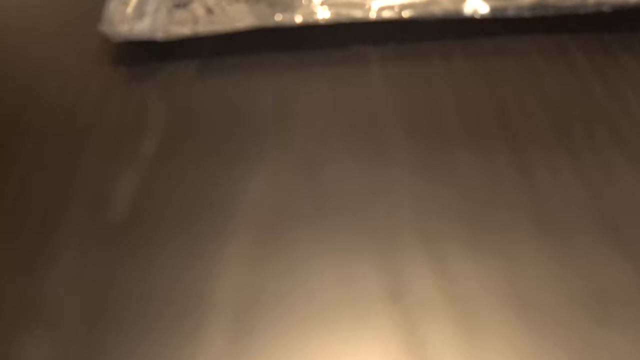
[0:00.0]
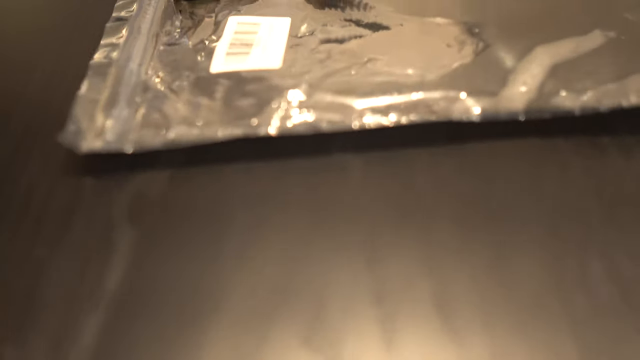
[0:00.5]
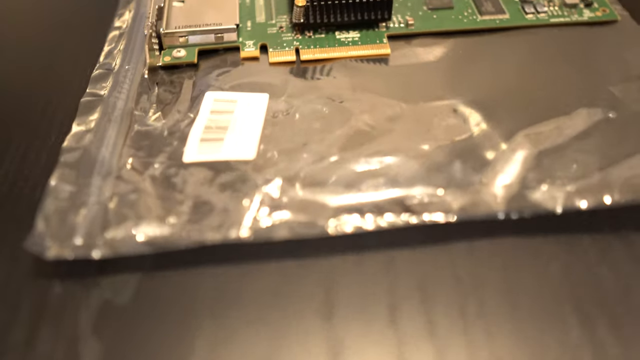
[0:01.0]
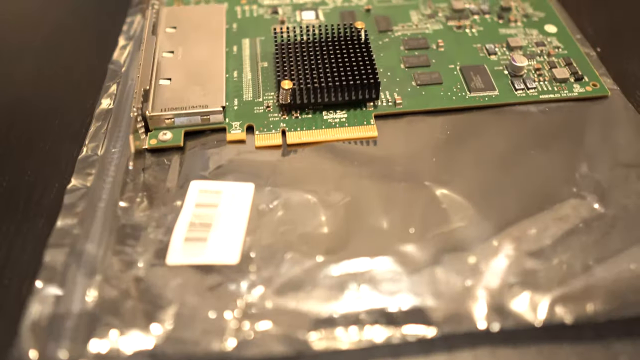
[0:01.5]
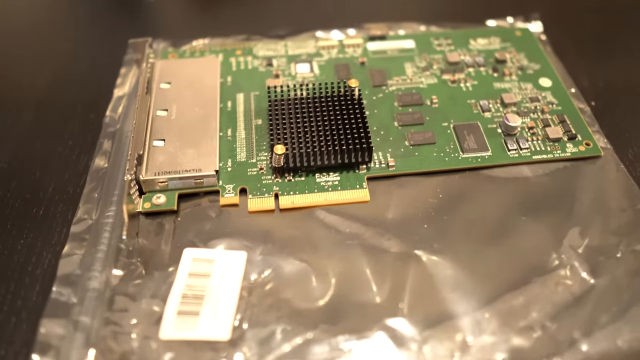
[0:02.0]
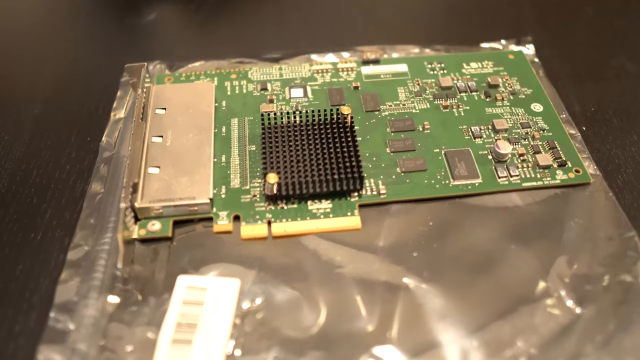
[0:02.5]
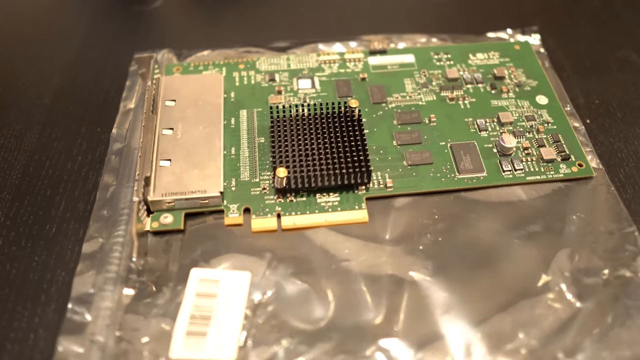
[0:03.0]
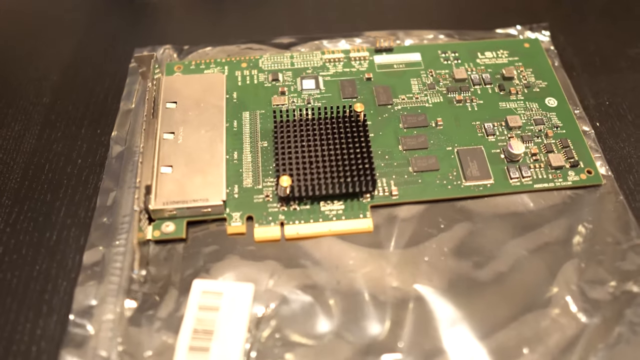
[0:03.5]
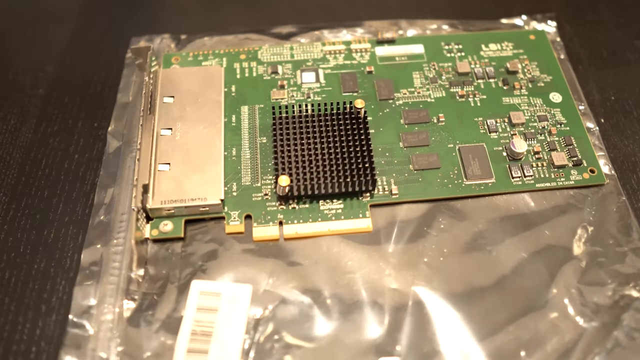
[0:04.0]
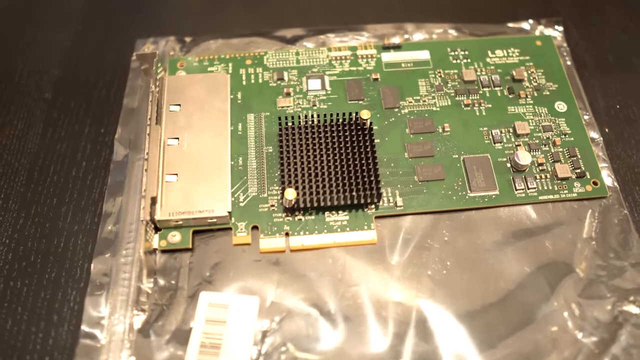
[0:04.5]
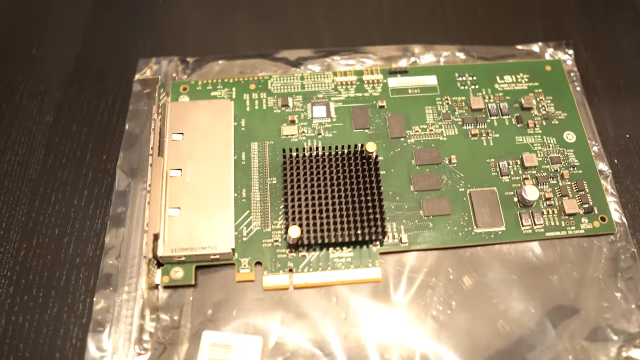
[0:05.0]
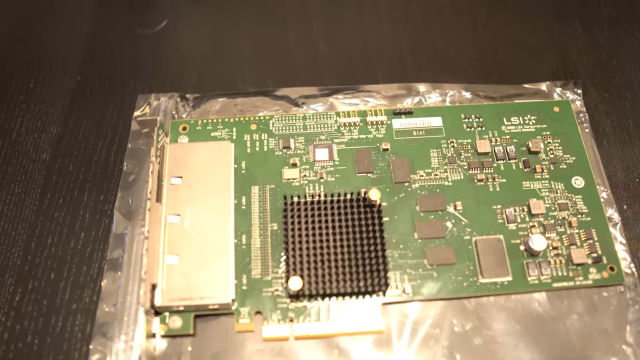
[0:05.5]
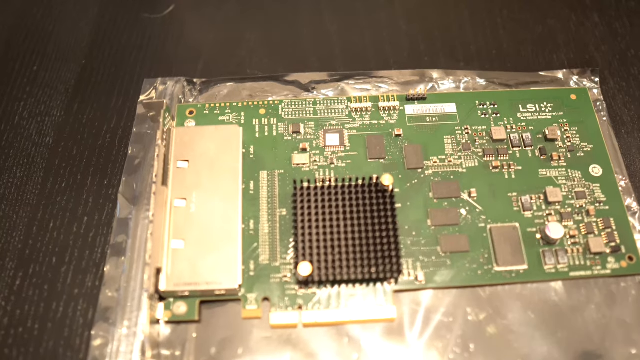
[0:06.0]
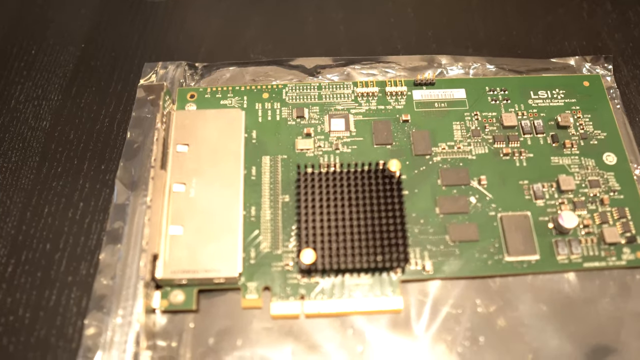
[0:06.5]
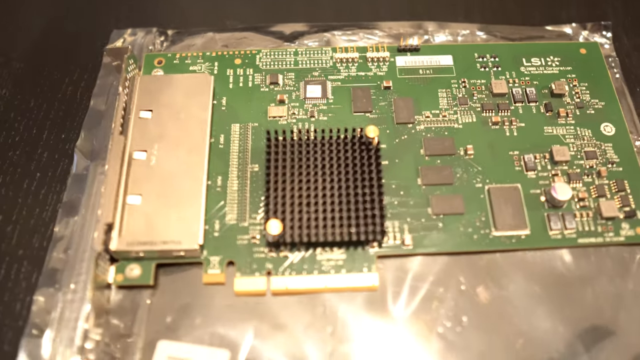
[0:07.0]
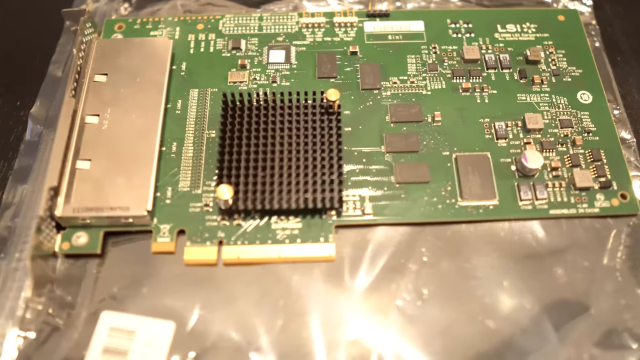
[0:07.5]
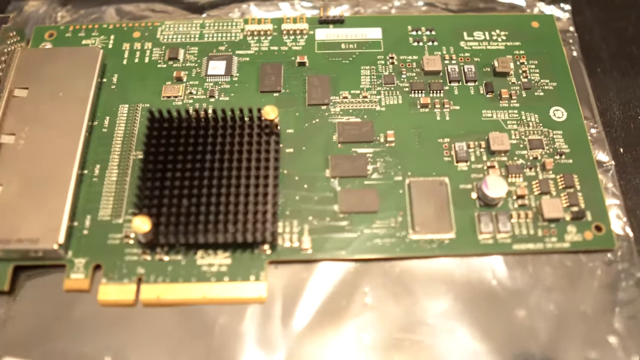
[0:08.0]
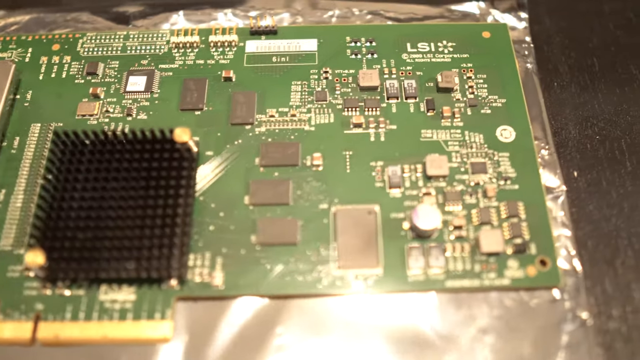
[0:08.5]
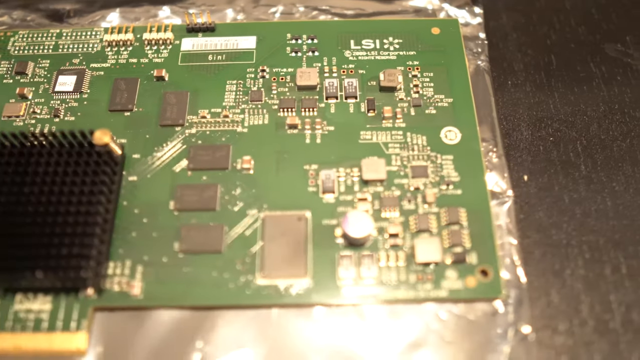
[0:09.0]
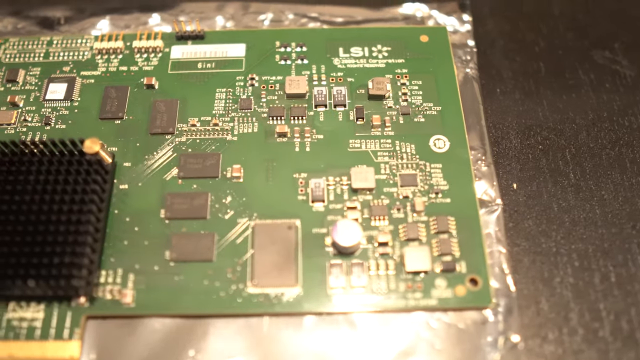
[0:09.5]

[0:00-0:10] A silver package appears first; what it contains looks like a hard drive or a chipboard for a computer. The package is a ziplock pouch with one side made of aluminum and bearing a barcode. The camera pans over the item, zooming in on the board, which is green and has a lot of silver on it.